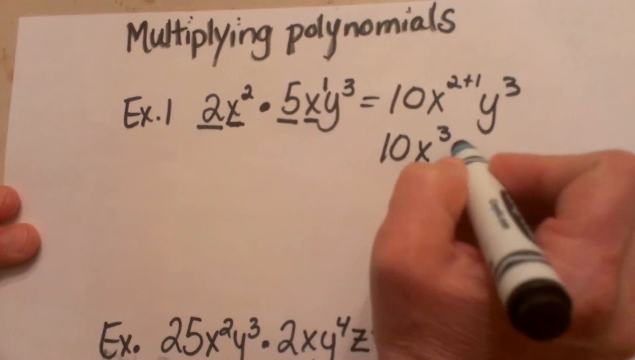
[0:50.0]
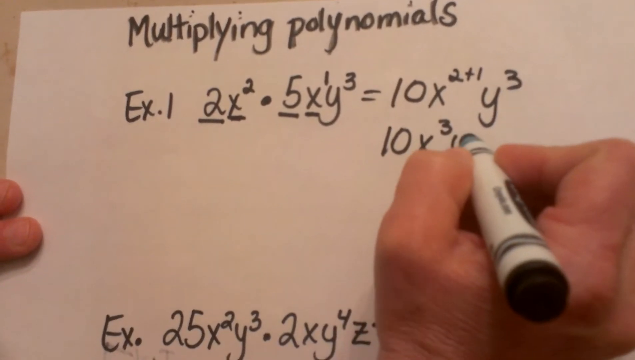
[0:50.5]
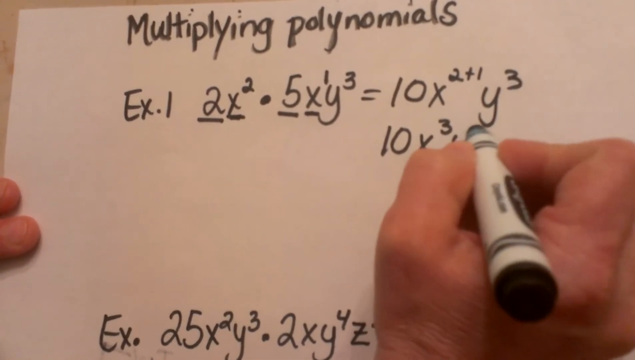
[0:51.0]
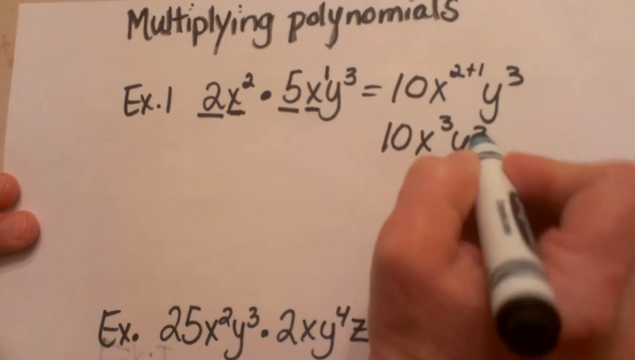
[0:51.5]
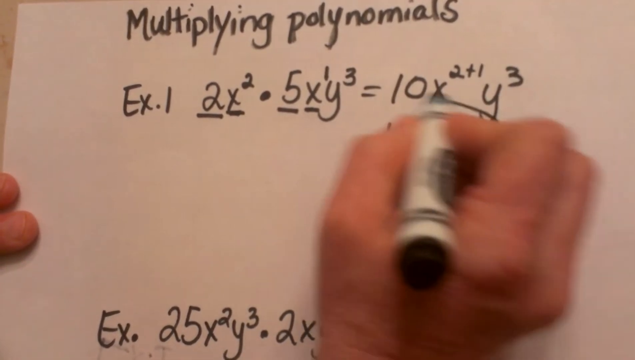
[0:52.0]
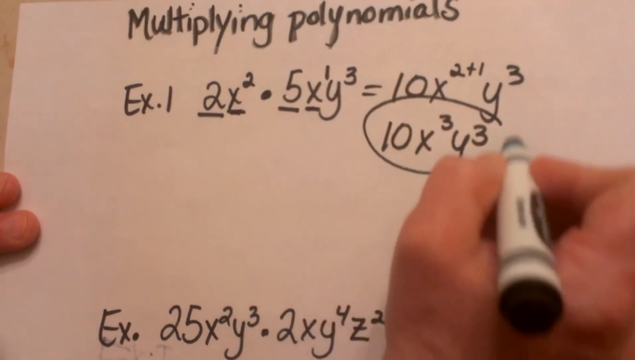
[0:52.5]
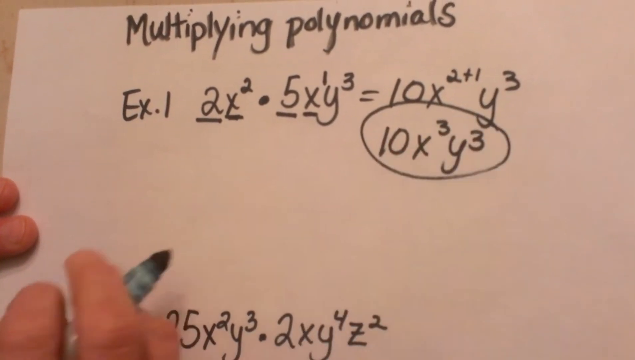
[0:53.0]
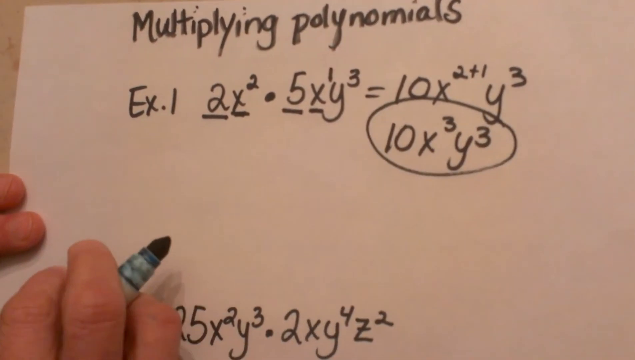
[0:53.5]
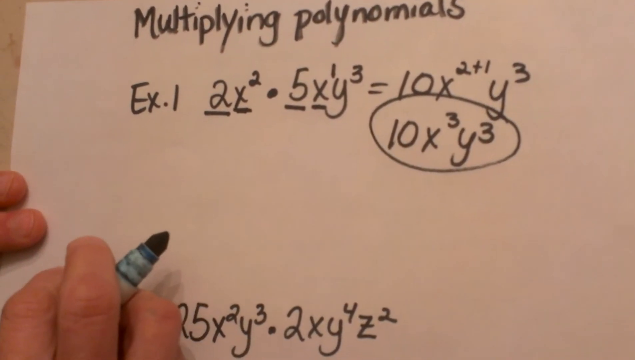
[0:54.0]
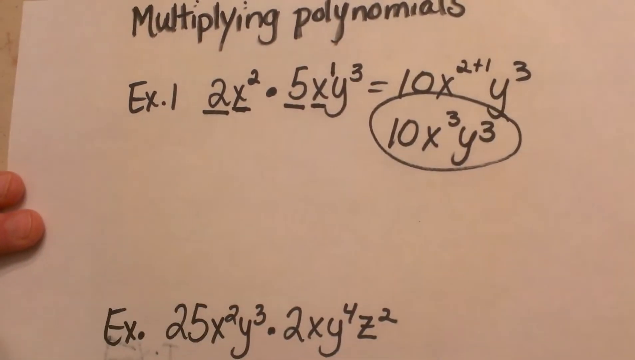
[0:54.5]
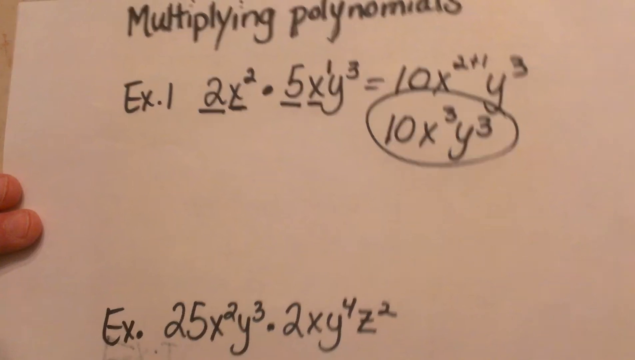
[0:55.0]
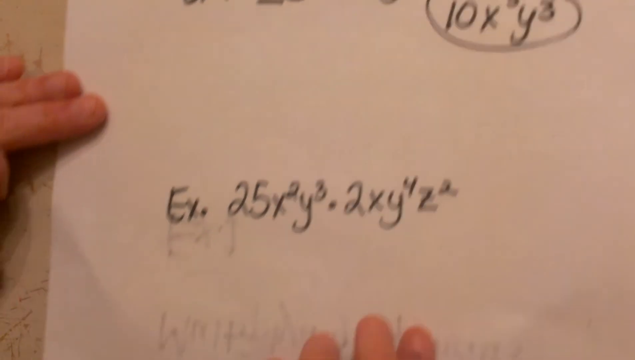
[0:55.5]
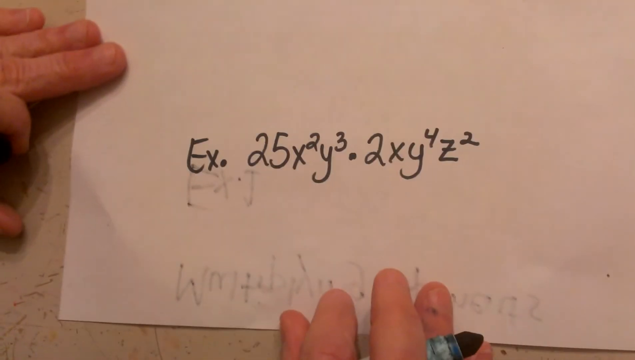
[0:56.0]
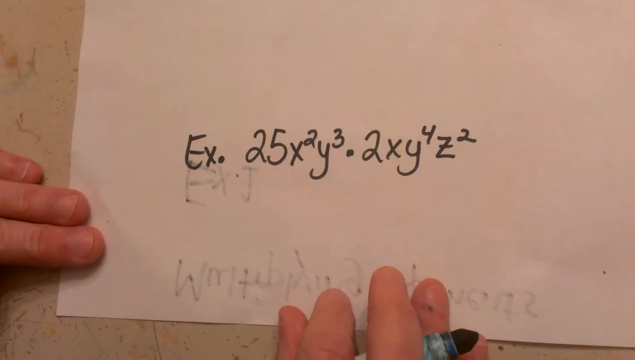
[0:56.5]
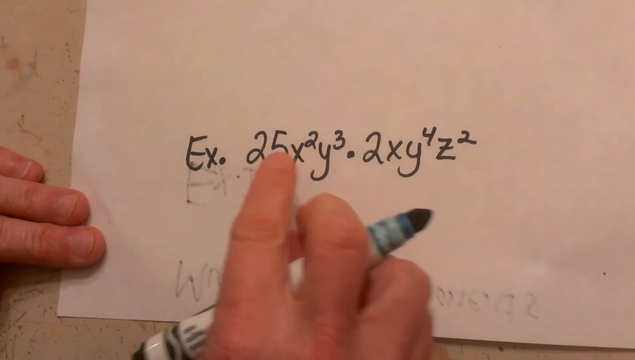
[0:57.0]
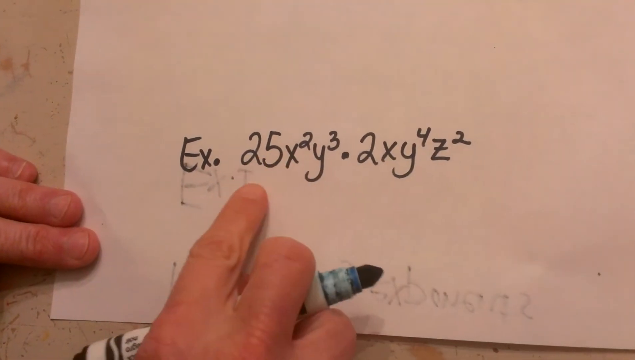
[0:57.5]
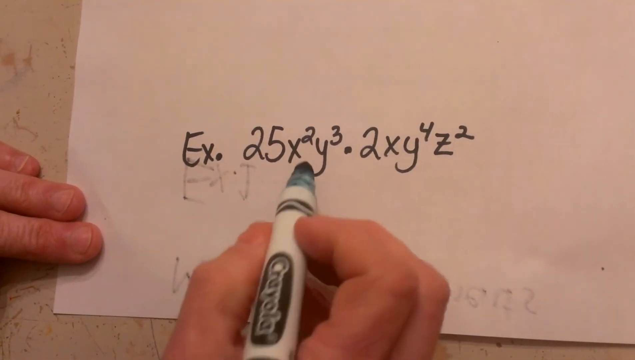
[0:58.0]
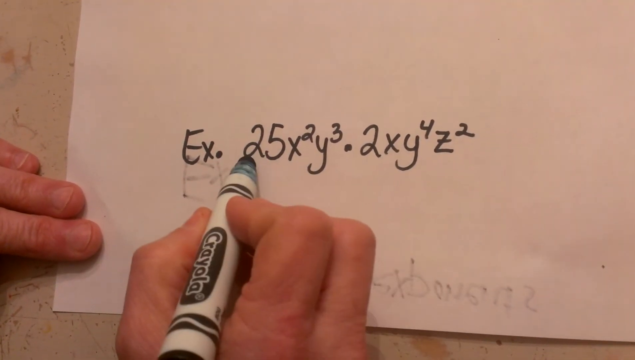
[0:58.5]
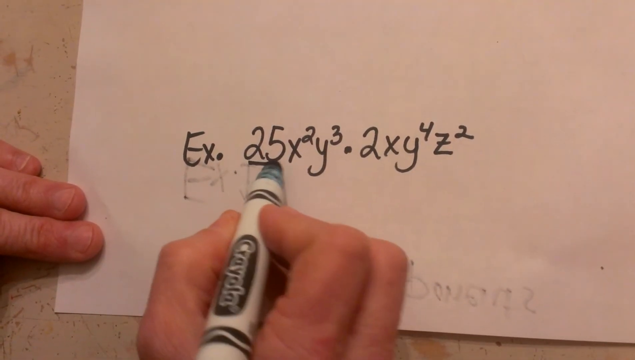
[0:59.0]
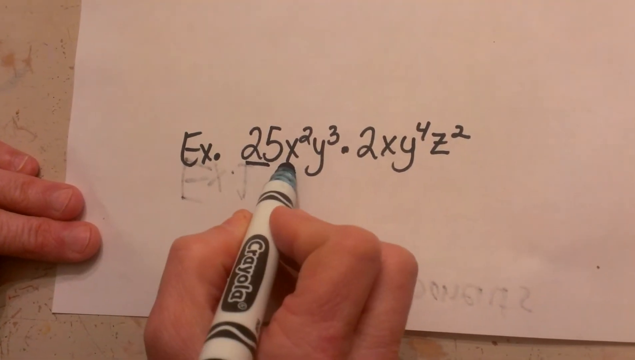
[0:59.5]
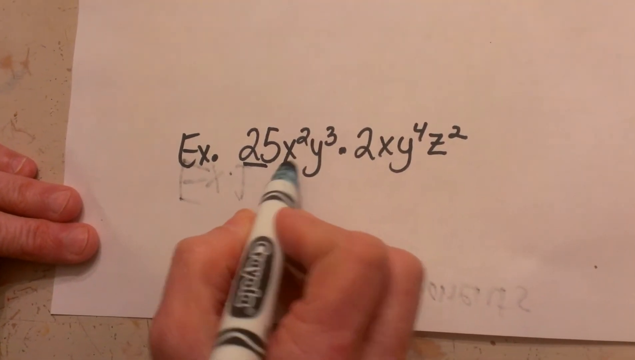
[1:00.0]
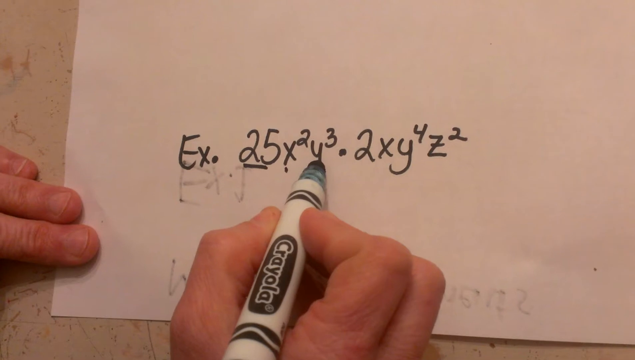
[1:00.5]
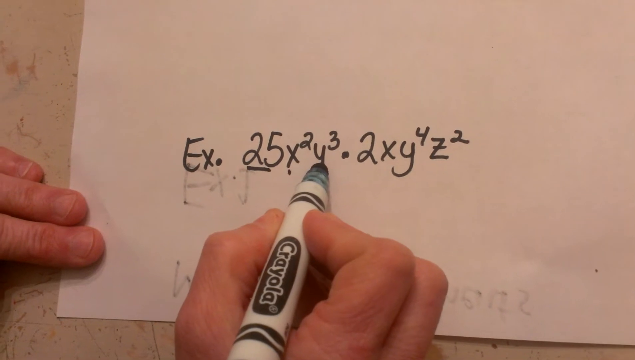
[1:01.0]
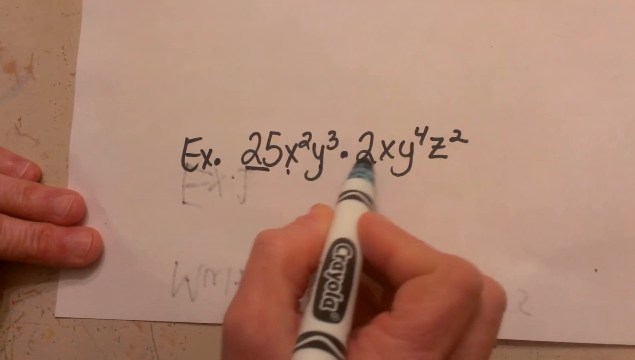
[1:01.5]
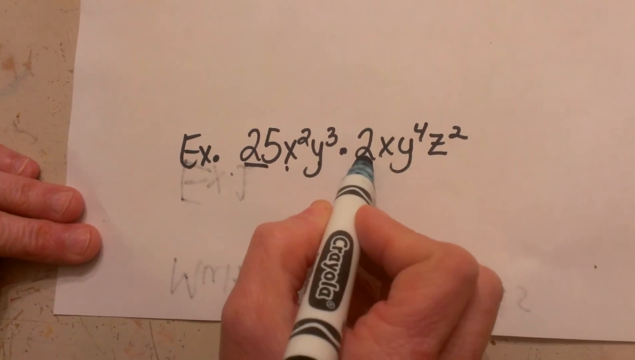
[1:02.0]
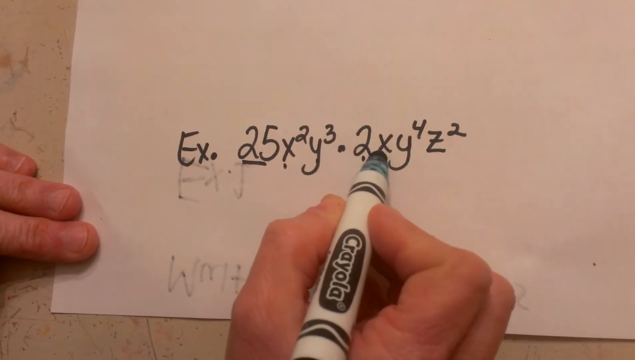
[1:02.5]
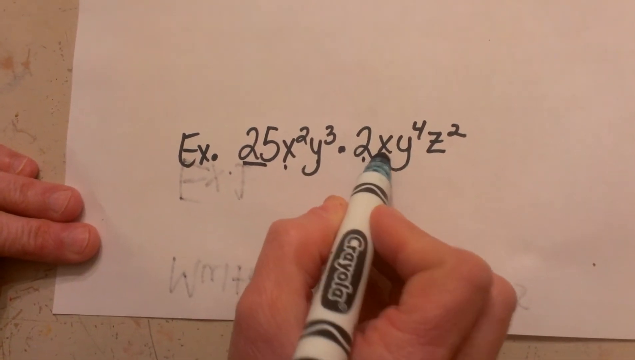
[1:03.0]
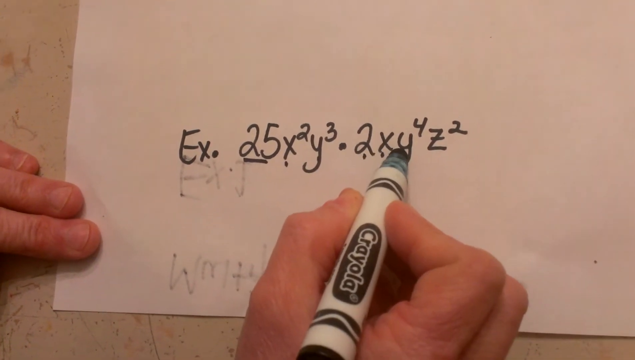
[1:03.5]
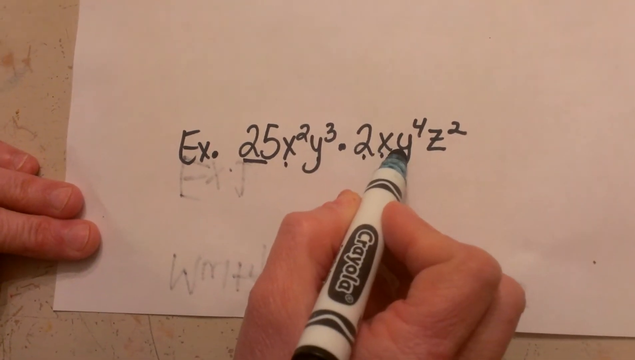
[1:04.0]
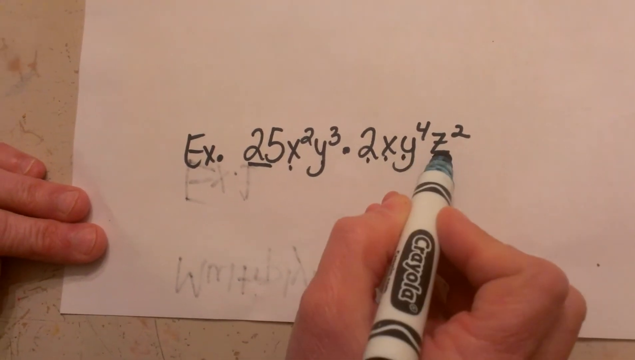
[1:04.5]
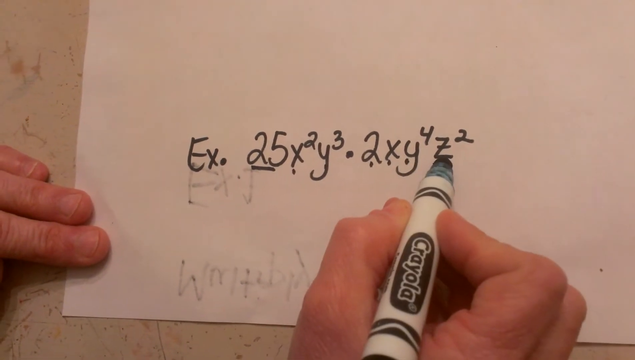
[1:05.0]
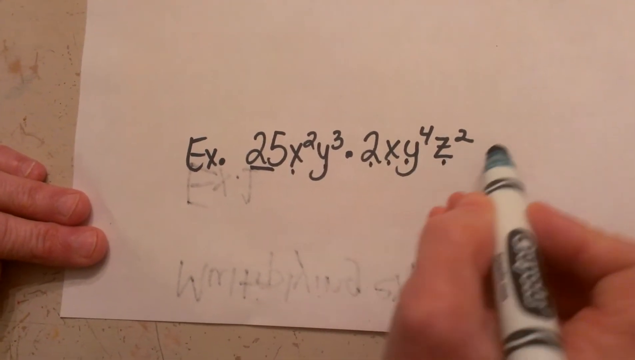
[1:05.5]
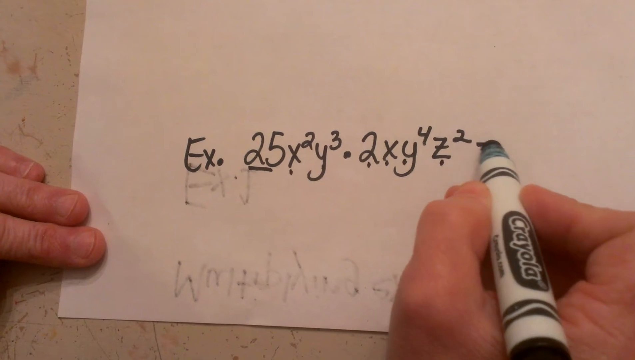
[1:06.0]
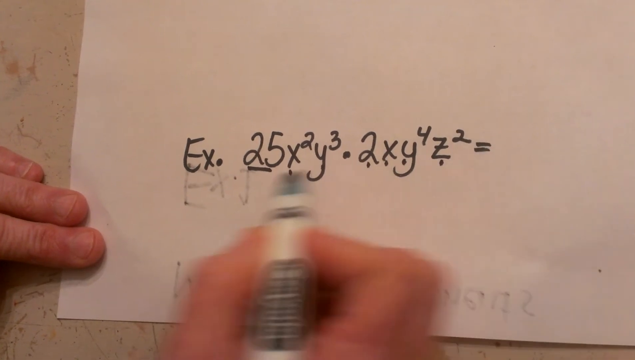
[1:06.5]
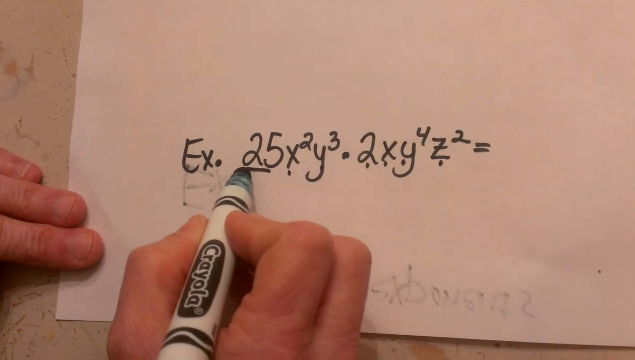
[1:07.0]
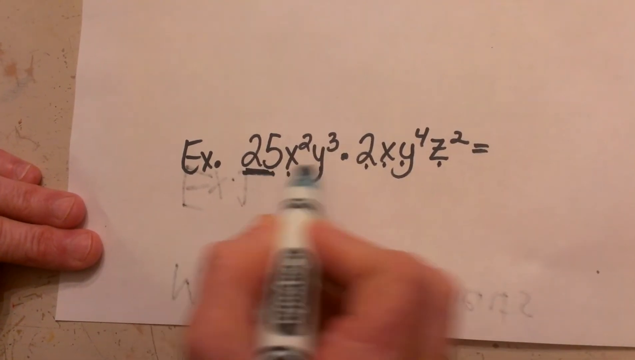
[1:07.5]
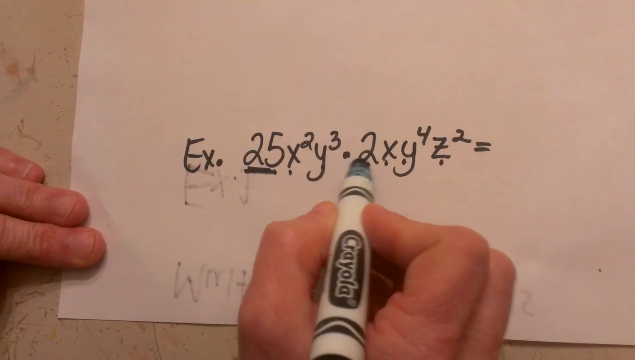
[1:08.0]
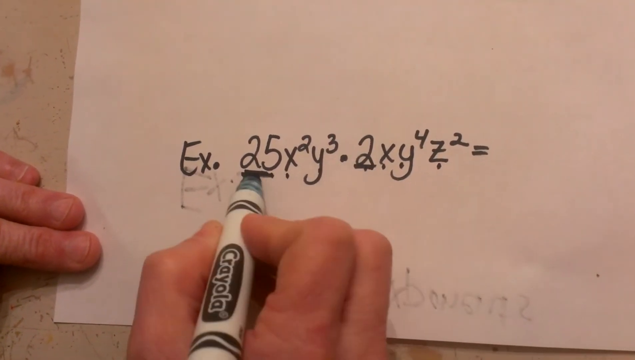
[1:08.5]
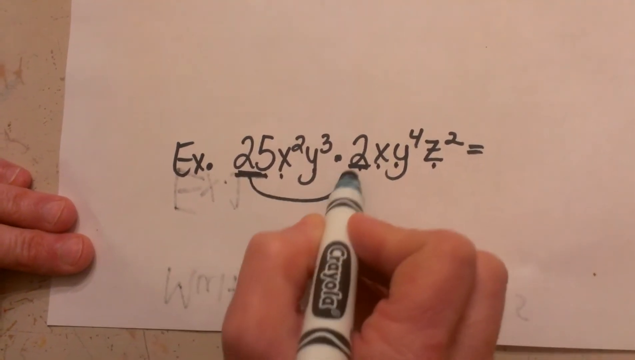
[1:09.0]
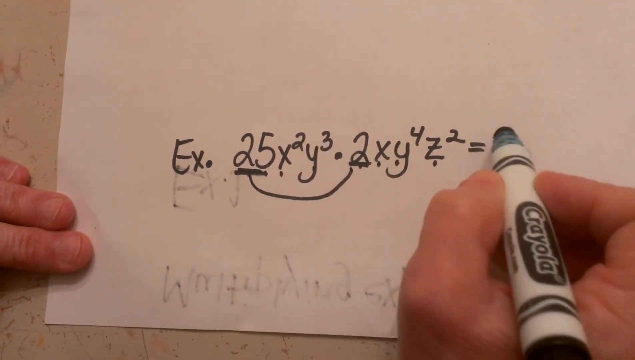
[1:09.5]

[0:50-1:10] The answer to the first example is 10x exponent 3 y exponent 3. A second example follows: 25x exponent 2 y exponent 3 multiplied by 2xy exponent 4 z exponent 2. The facilitator begins solving it by multiplying the first numbers, 25 and 2.